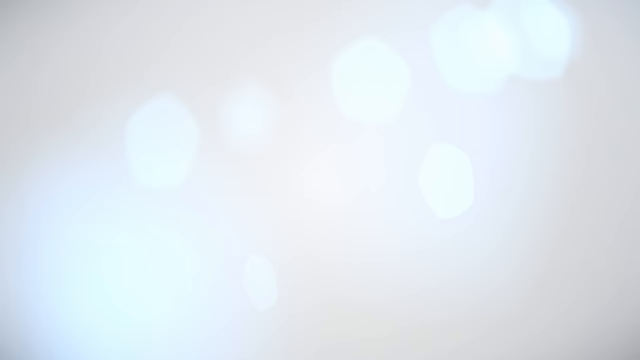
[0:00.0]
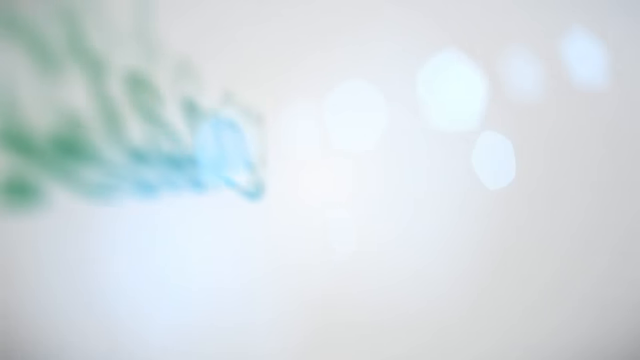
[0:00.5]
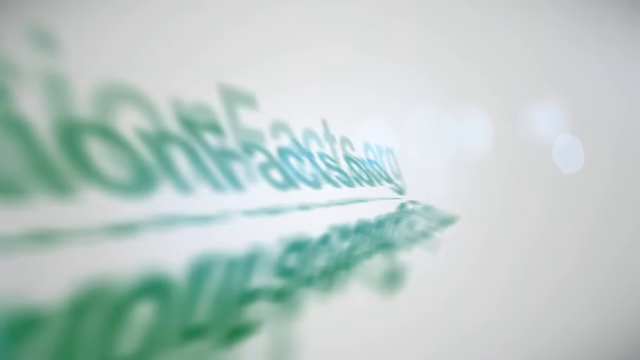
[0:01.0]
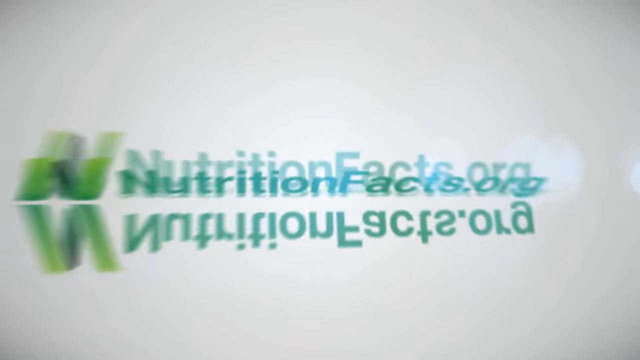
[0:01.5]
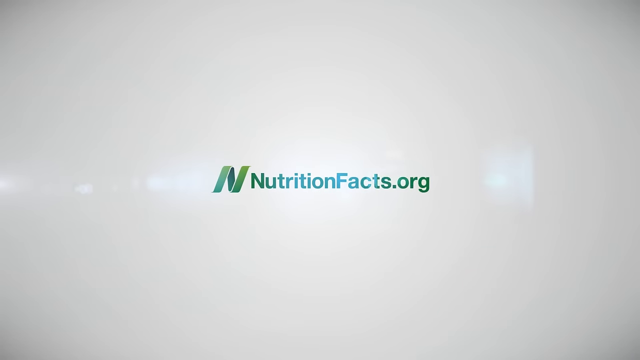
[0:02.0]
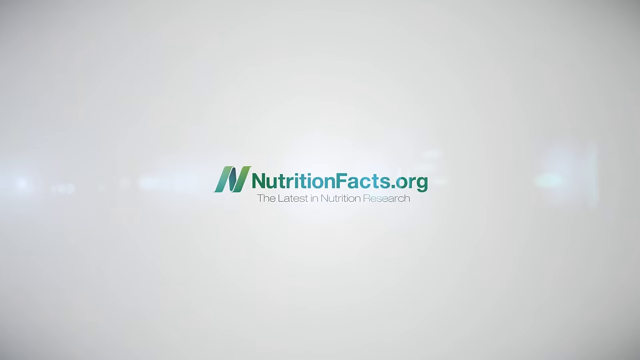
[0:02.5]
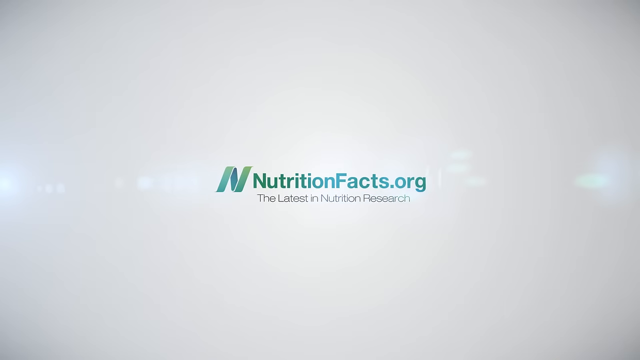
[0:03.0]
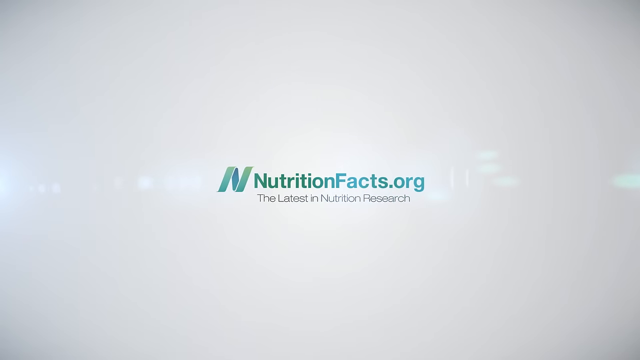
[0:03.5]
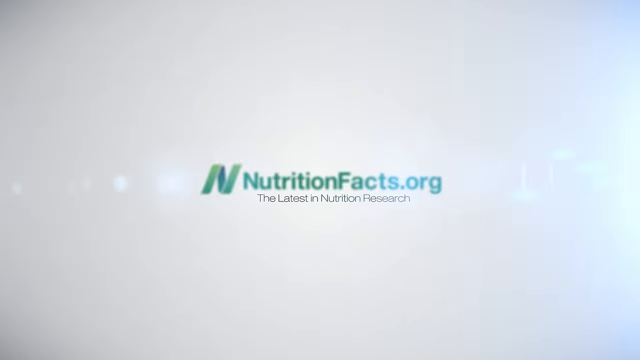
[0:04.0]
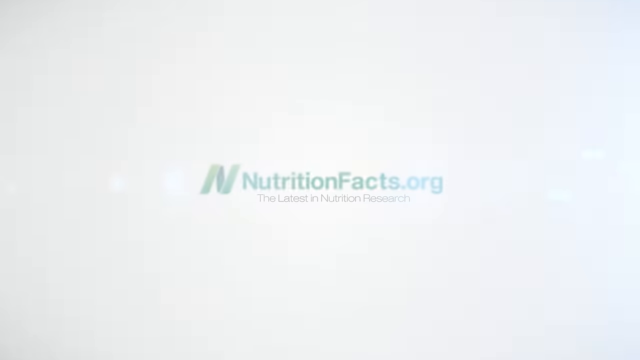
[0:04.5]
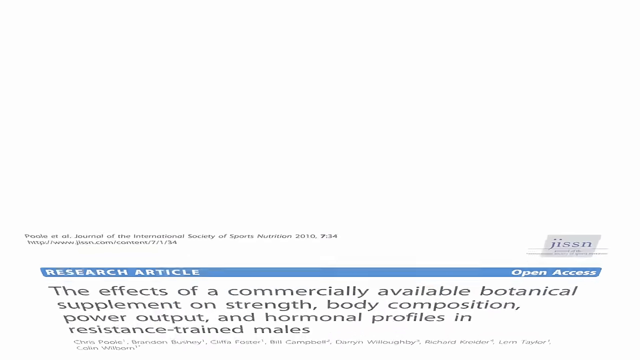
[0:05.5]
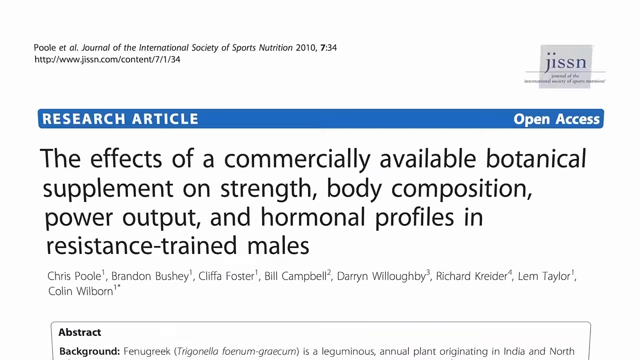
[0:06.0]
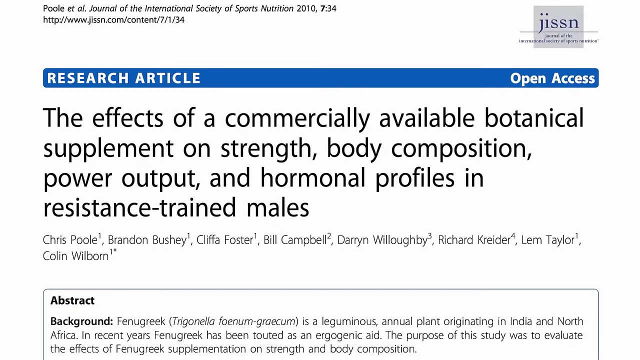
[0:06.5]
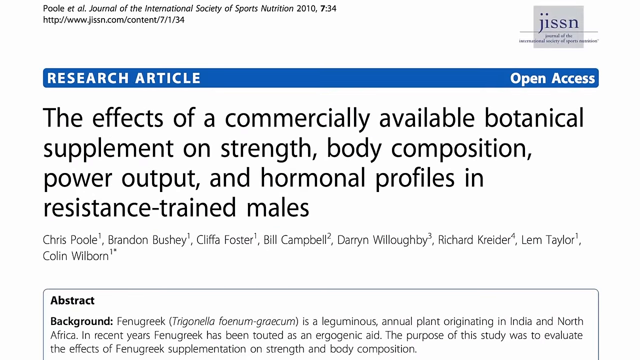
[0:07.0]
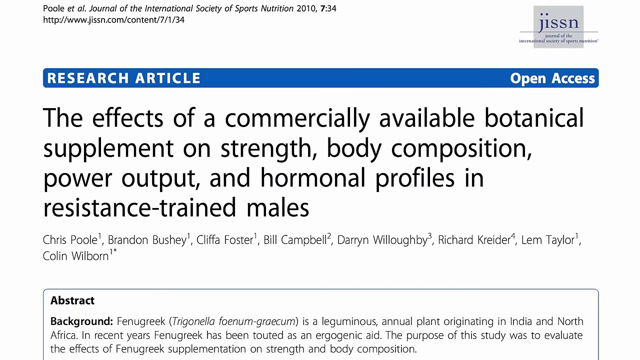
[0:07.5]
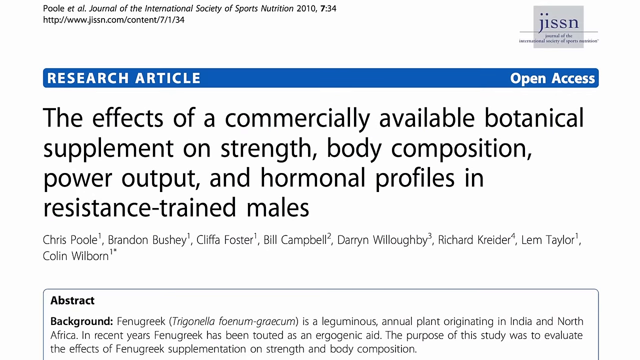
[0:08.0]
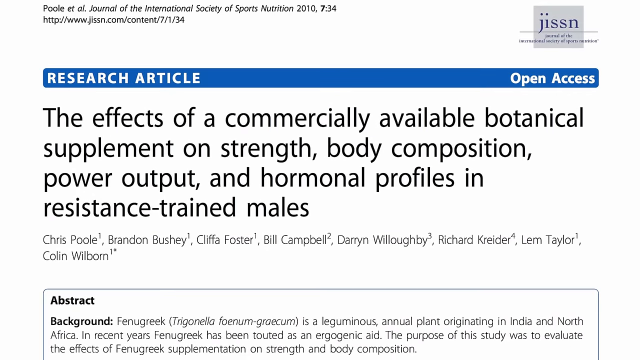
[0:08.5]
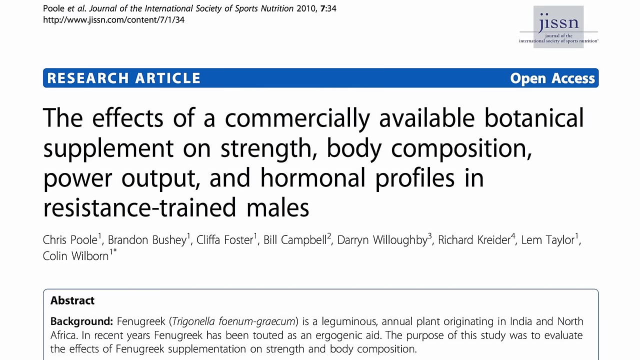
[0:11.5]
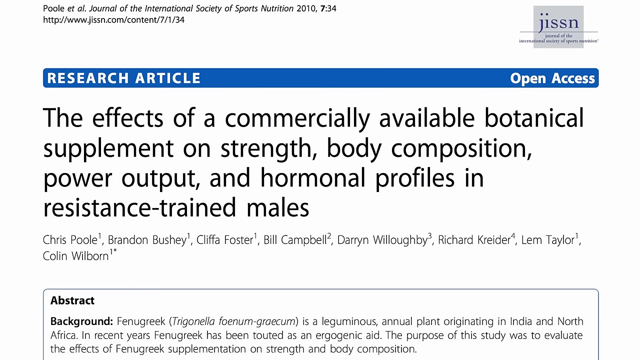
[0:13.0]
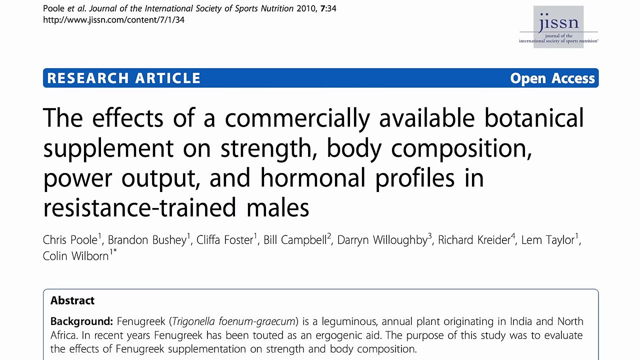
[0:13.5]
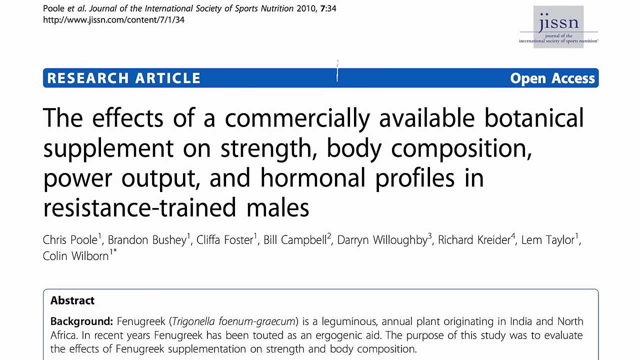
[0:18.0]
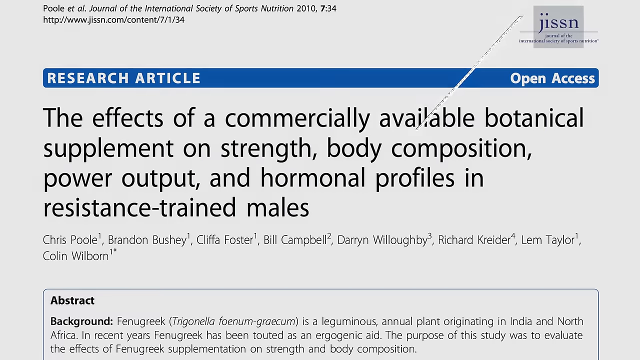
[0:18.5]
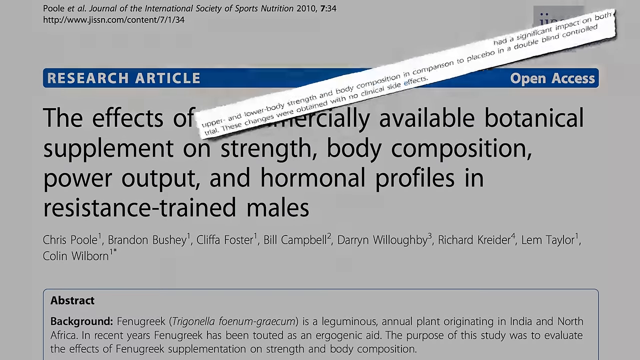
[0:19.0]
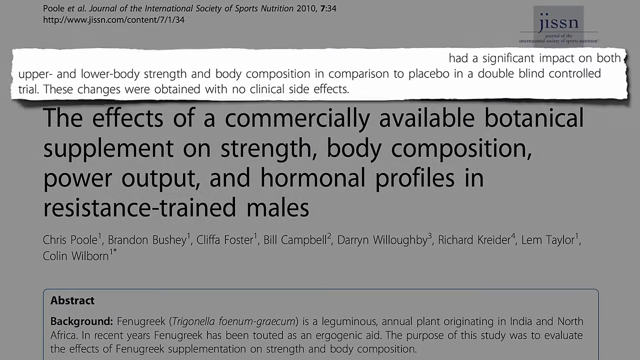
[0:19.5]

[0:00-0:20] "NutritionFacts.org" appears in green letters, written as one word with a capitalized N and F. Underneath it, in smaller black letters, the line "the latest in nutrition research" appears, and to the left of the name is a green N. The background is kind of a multicolored greenish. Next comes an excerpt from a research article titled "the effects of a commercially available botanical supplement on strength, body composition, power output, and hormonal profiles in resistance-trained males" in blue type in sentence case. Above the title is a blue line with white letters reading "research article" and "open access." In the upper right corner, a small gray box reads "jissn" in lowercase letters, the name of the journal. In the upper left is a URL for the article.